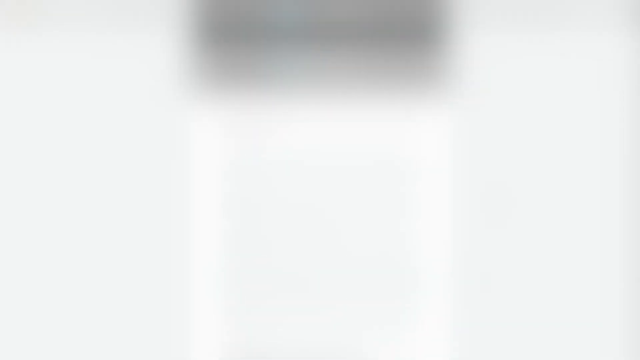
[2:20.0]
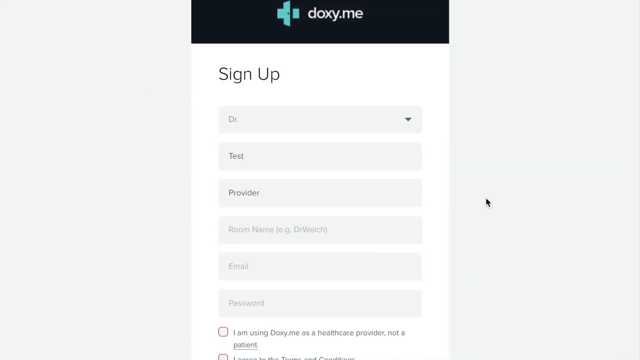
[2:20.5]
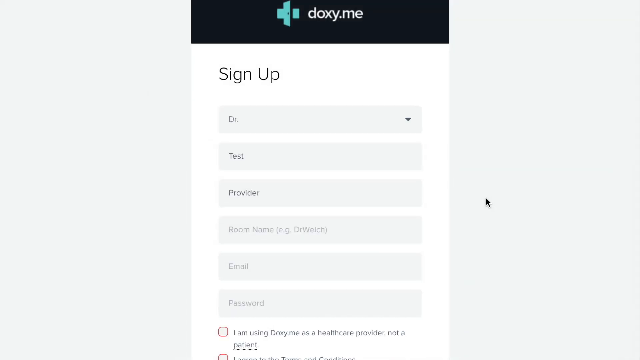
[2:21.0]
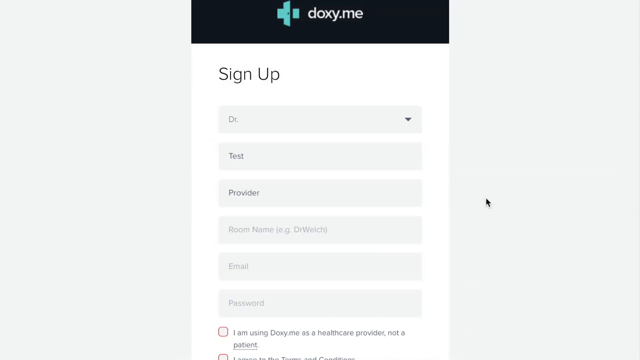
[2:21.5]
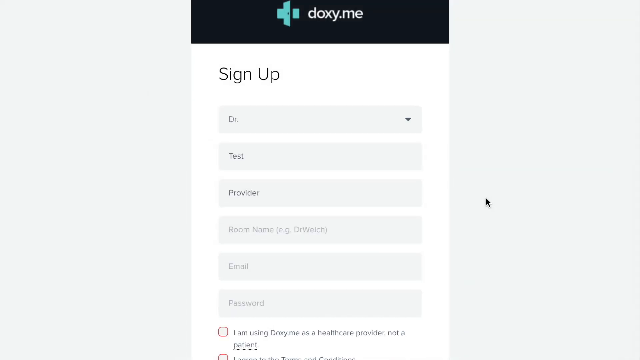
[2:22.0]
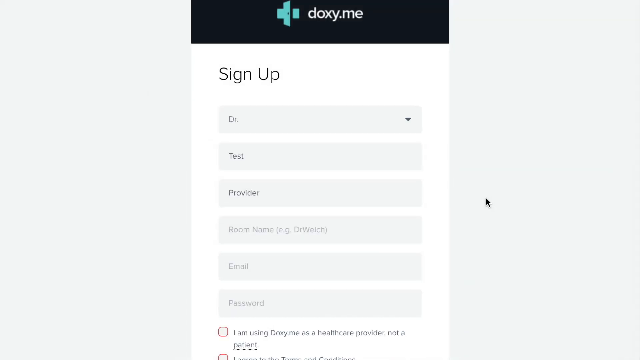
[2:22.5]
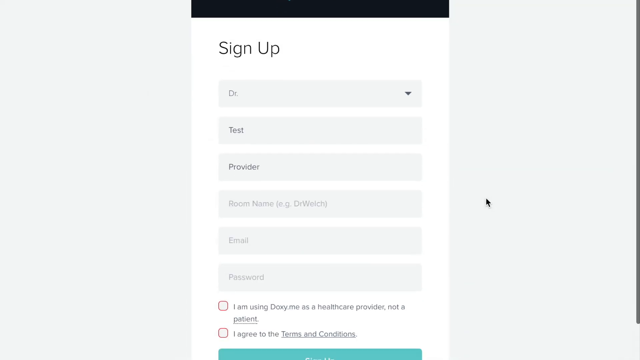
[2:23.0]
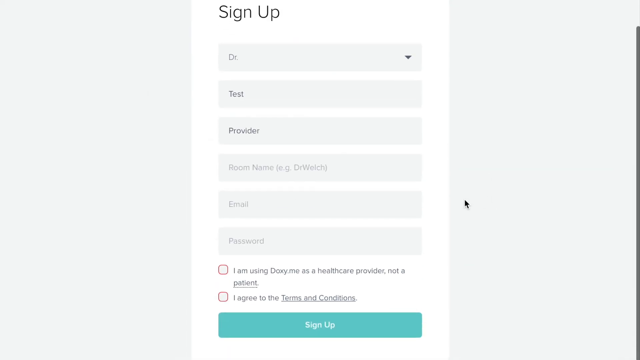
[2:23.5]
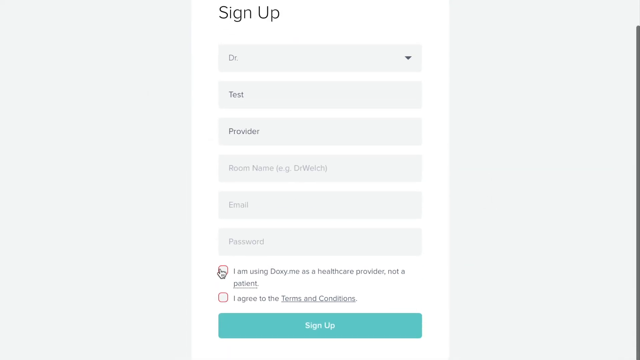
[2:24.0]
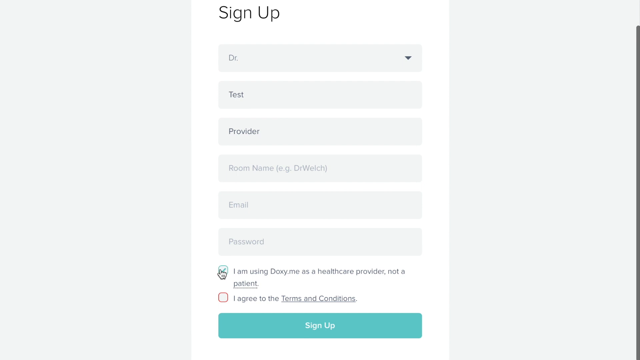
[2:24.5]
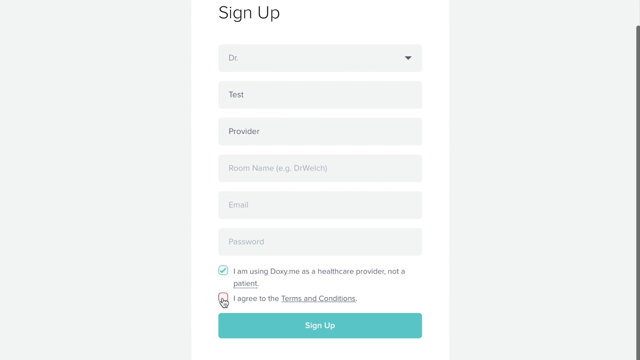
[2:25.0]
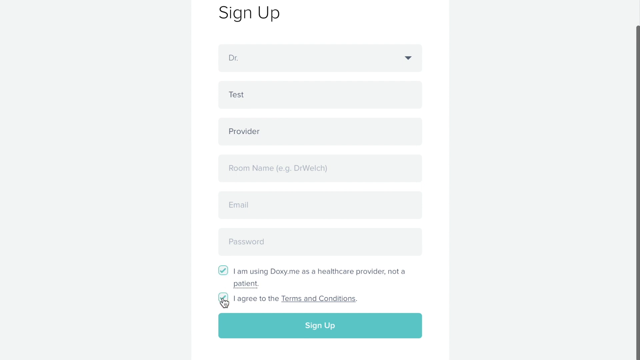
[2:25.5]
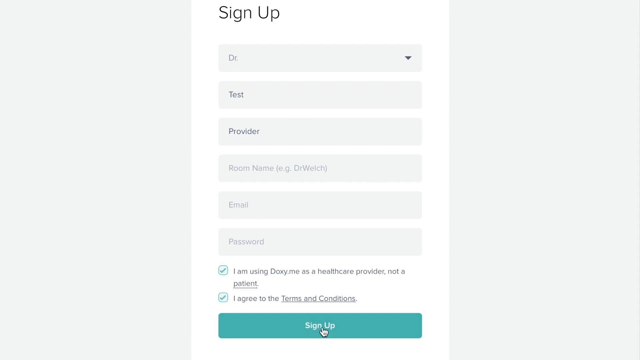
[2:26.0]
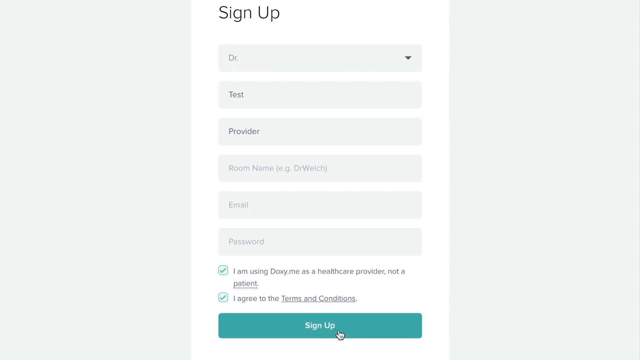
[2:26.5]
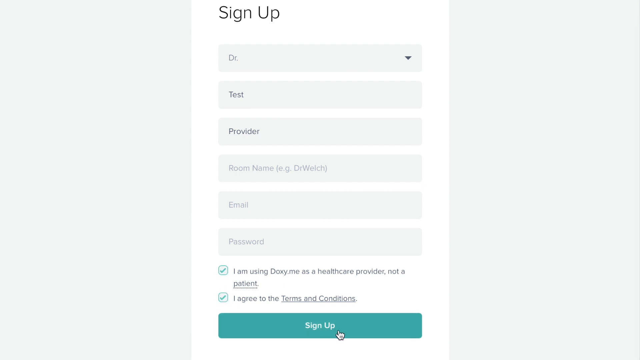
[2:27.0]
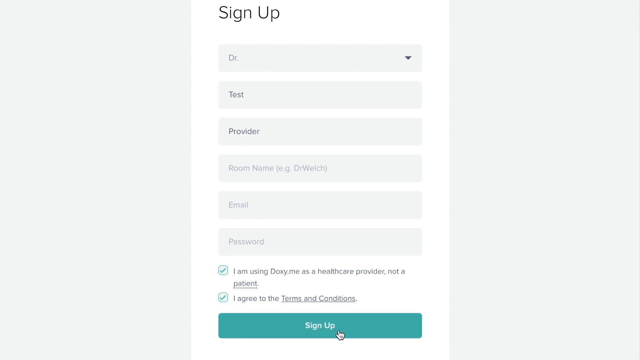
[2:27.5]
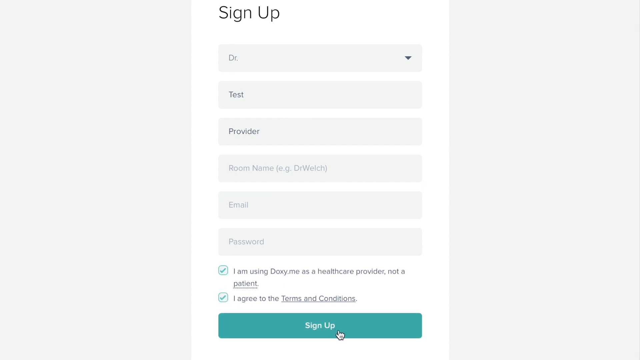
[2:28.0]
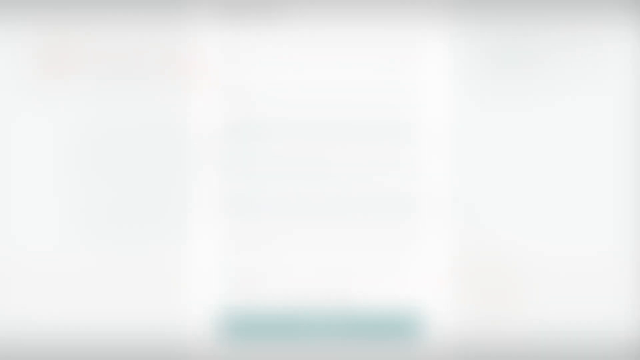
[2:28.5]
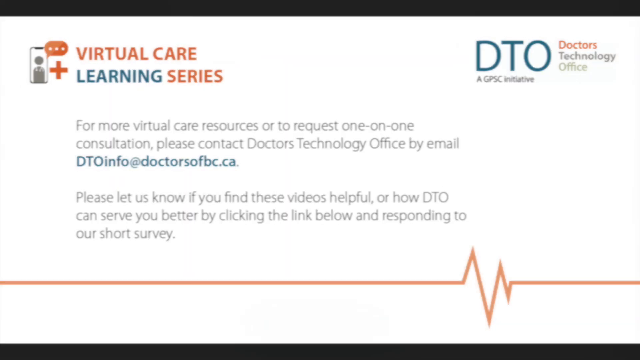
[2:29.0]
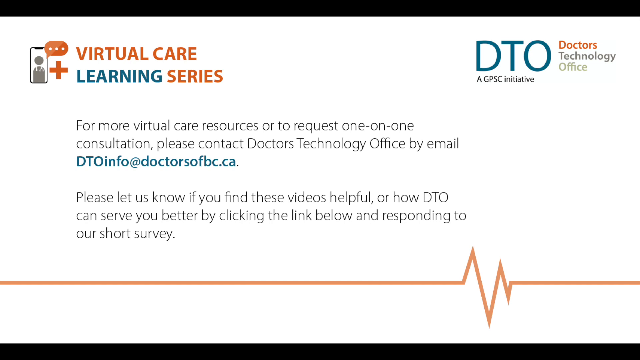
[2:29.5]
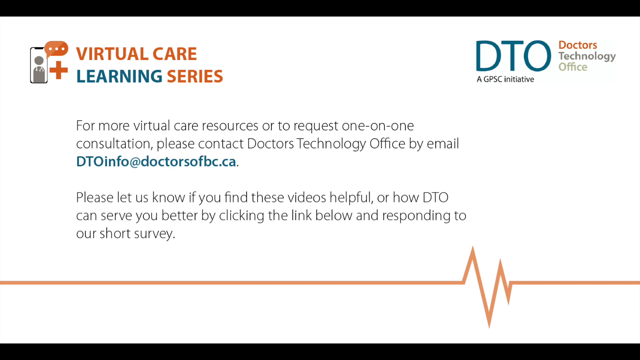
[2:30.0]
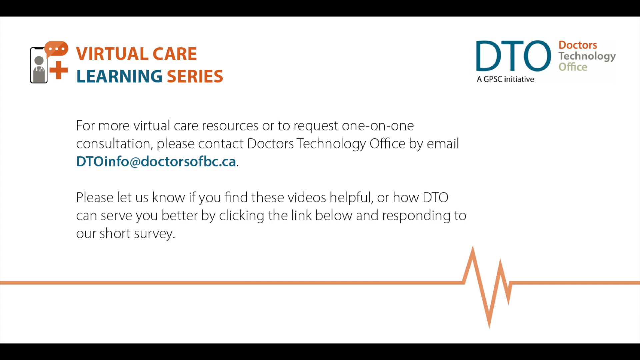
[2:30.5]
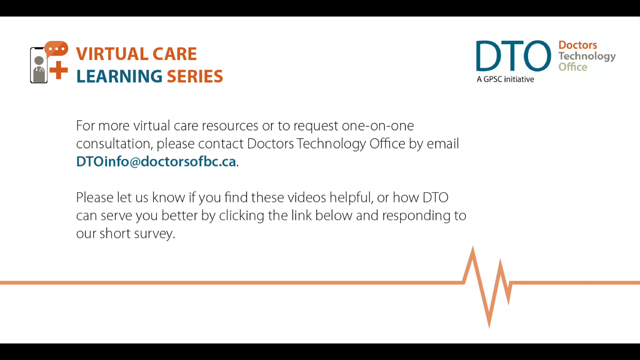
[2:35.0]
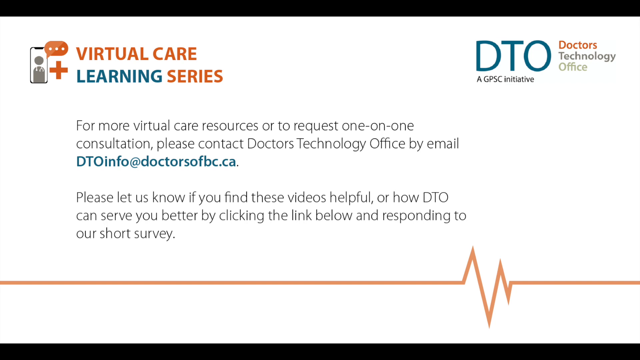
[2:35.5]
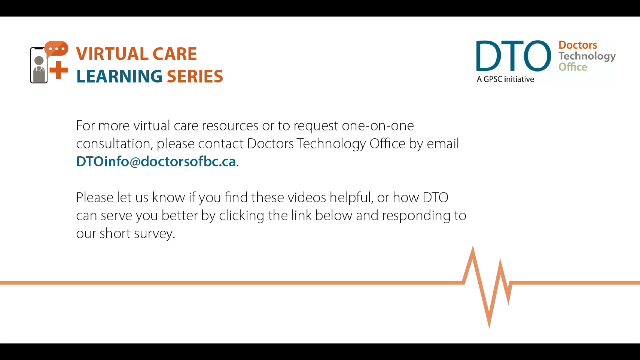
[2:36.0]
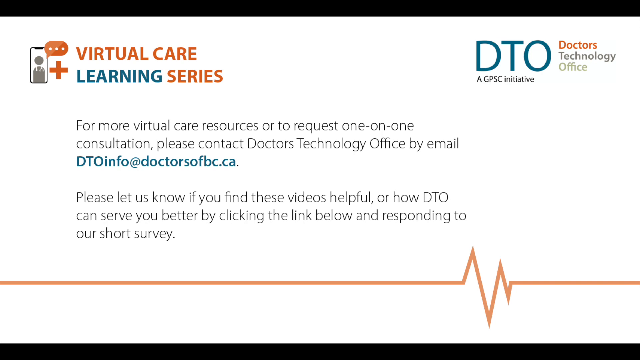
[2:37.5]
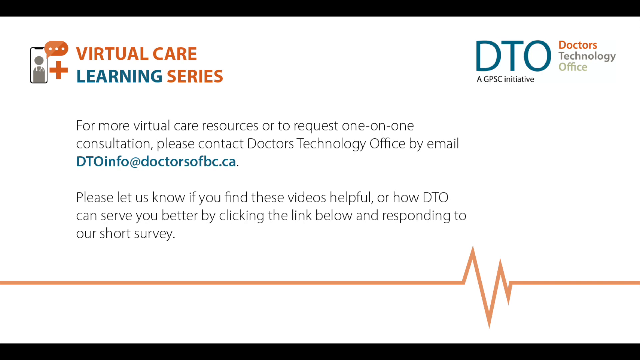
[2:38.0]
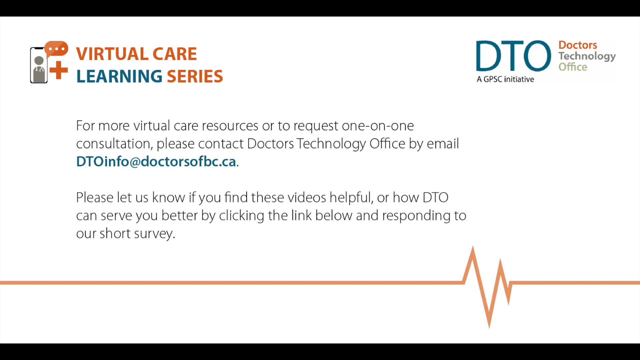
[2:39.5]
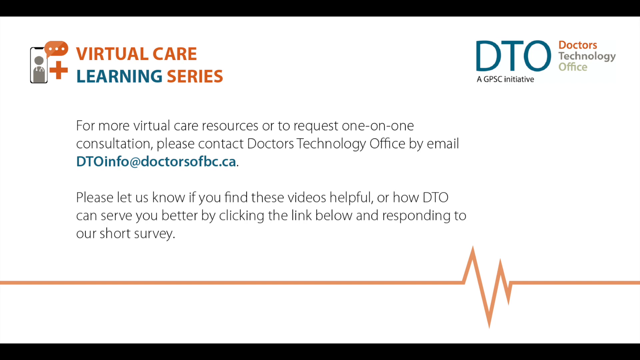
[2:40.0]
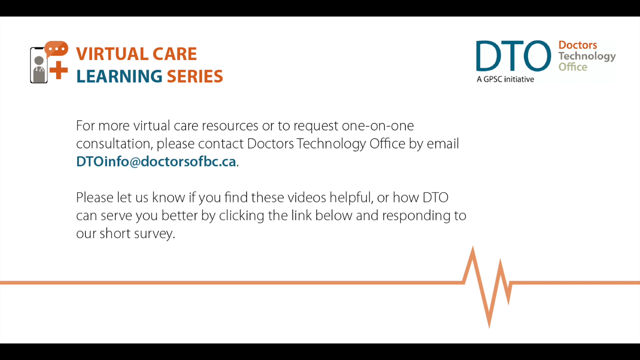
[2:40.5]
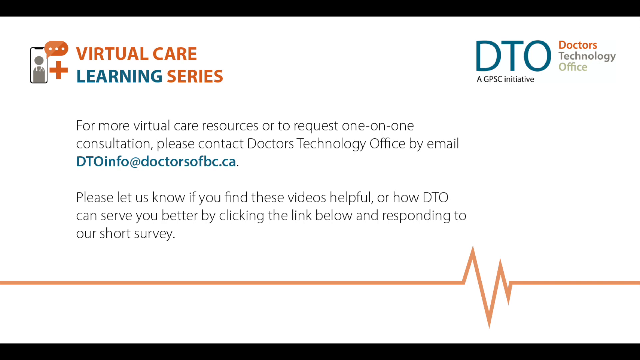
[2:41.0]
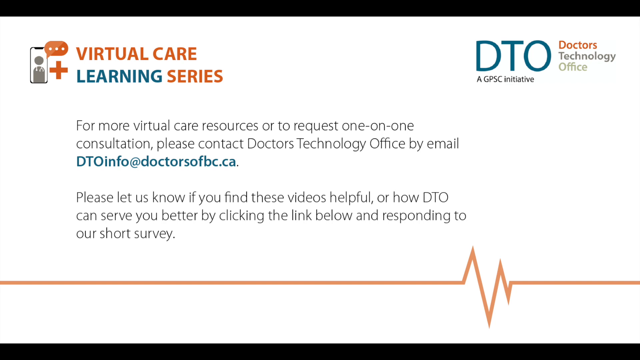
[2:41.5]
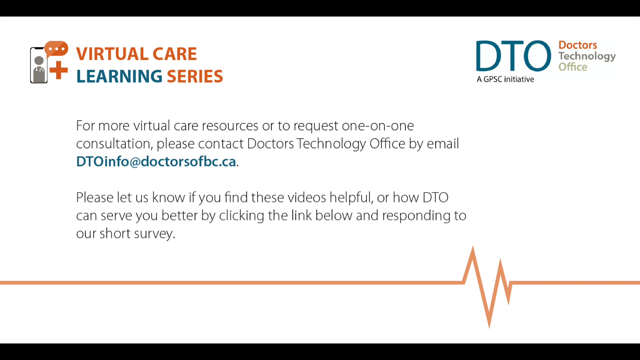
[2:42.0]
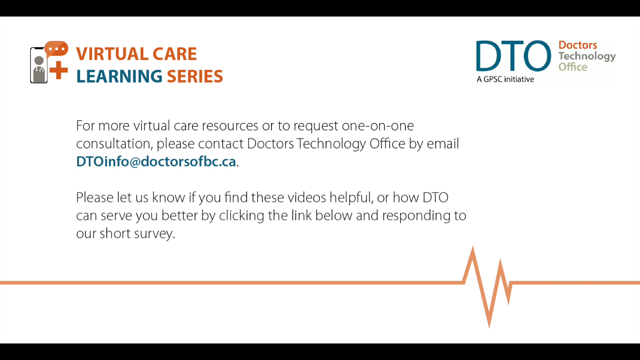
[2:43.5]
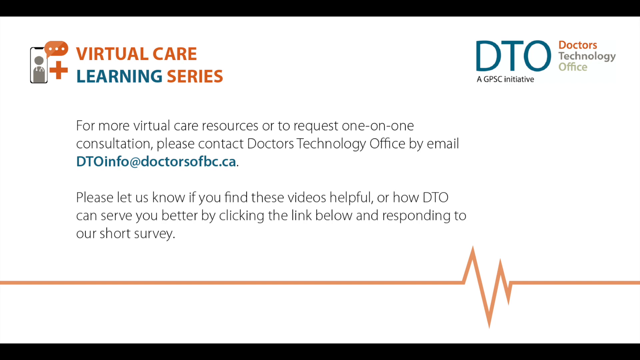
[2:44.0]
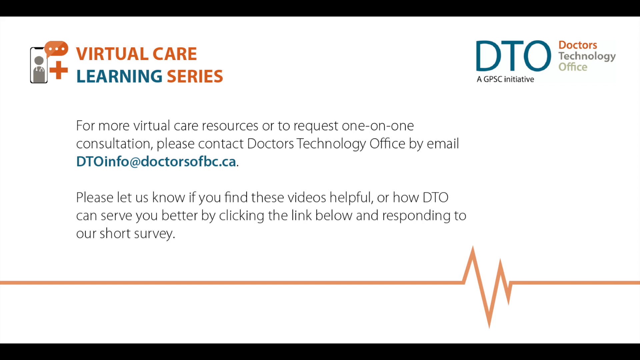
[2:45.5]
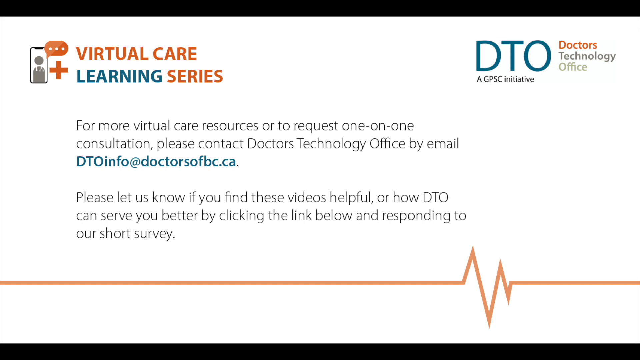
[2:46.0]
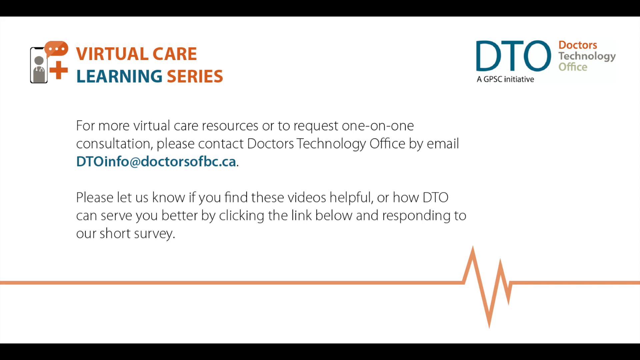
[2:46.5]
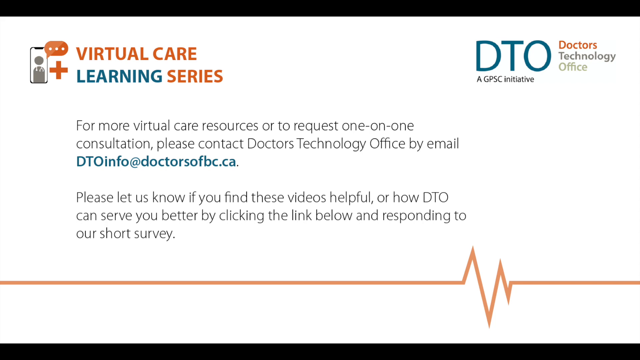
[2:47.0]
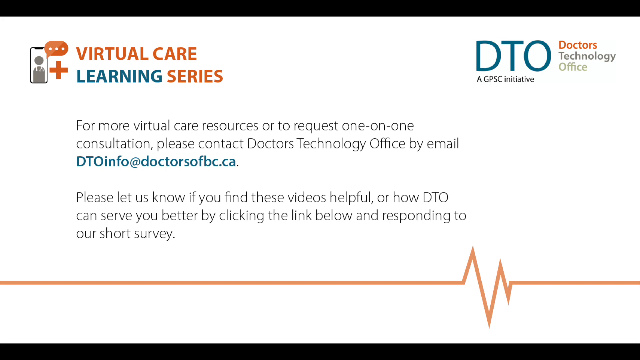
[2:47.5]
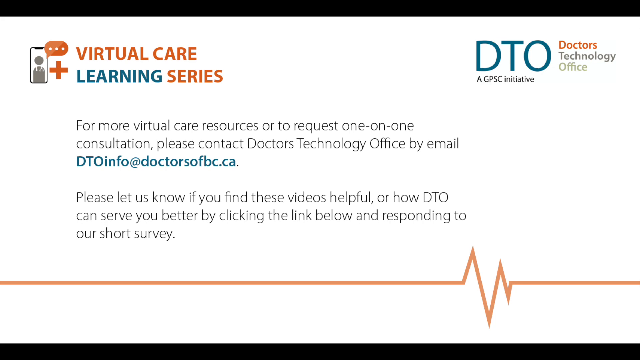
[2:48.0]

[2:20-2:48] A sign-up page on the doxy.me website has several areas to fill in, and a mouse clicks through the different areas. The page then changes to one with "virtual care learning series" in the top left corner and "DTO, Doctor's Technology Office" in the top right corner. Text reads "for more virtual care resources or to request one-on-one consultation, please contact Doctor's Technology Office by email, dtoinfo at doctorsofbc.ca. Please let us know if you find these videos helpful or how DTO can serve you better by clicking the link below and responding to our short survey." At the bottom of the screen is a single line of an echocardiogram machine showing a heartbeat.